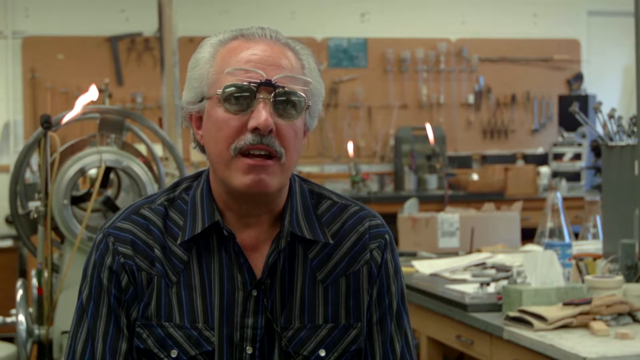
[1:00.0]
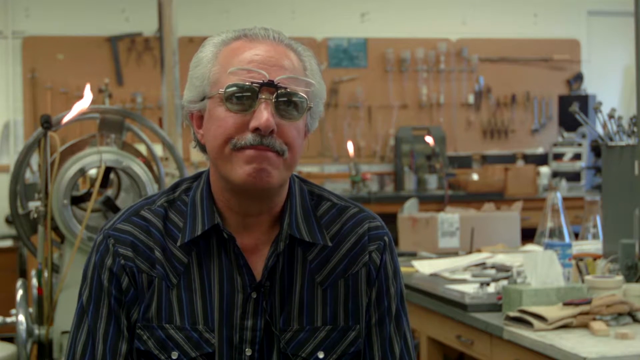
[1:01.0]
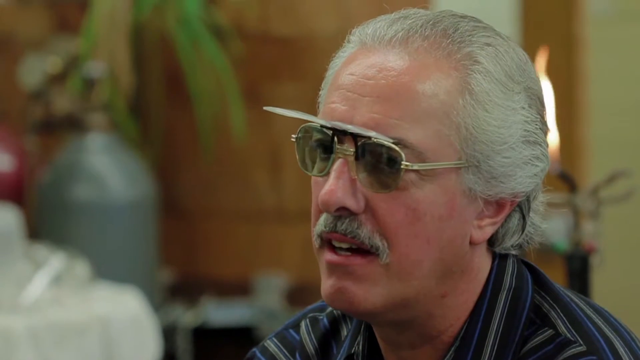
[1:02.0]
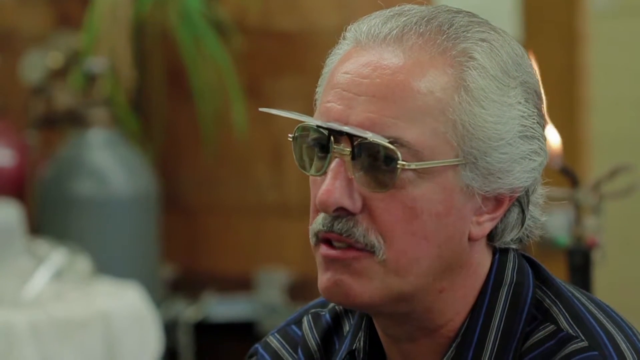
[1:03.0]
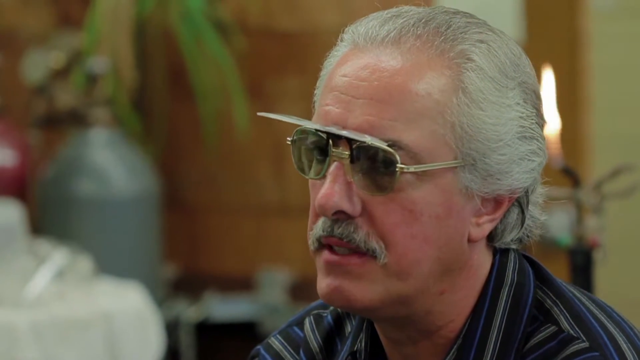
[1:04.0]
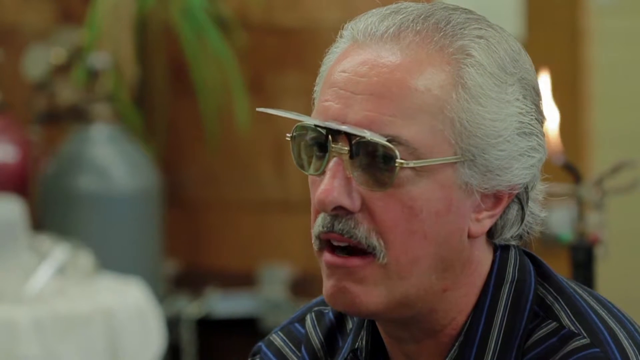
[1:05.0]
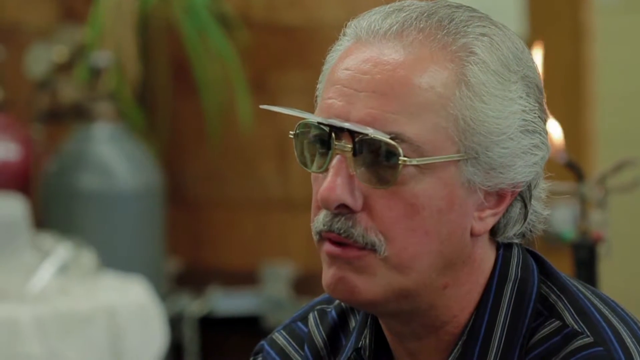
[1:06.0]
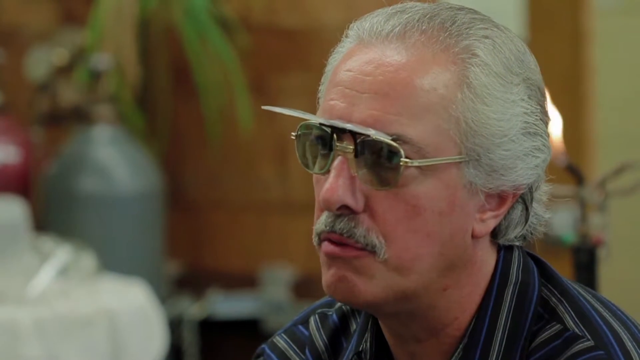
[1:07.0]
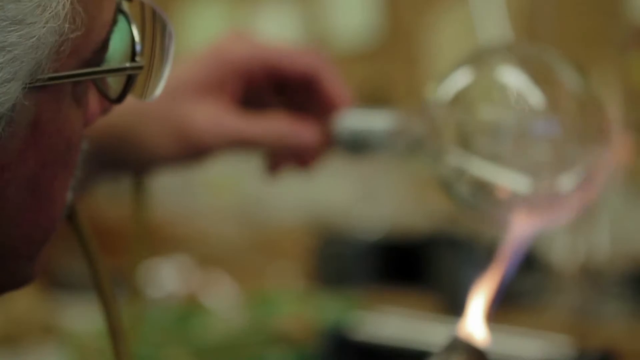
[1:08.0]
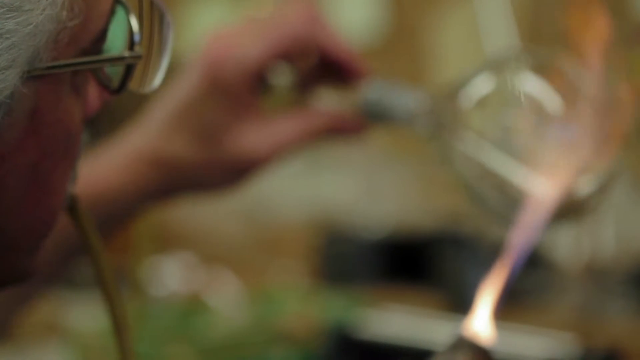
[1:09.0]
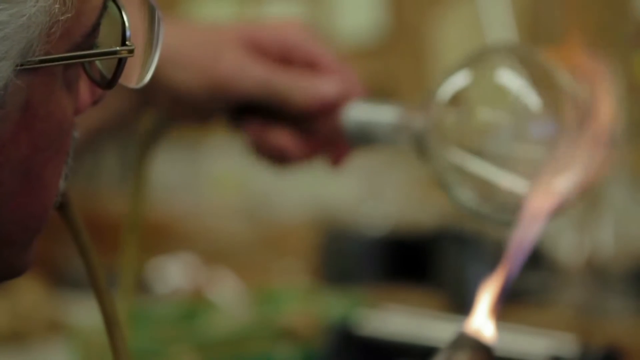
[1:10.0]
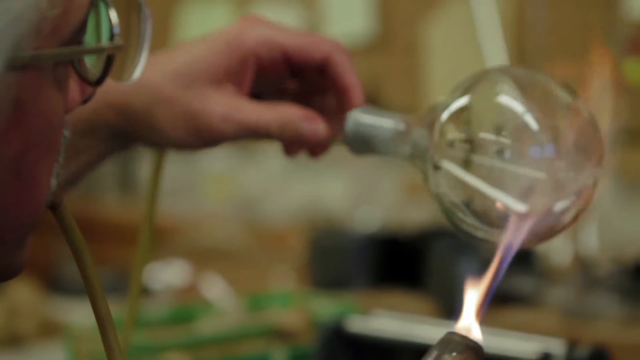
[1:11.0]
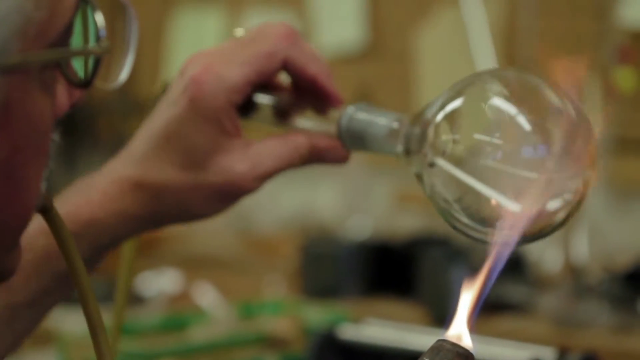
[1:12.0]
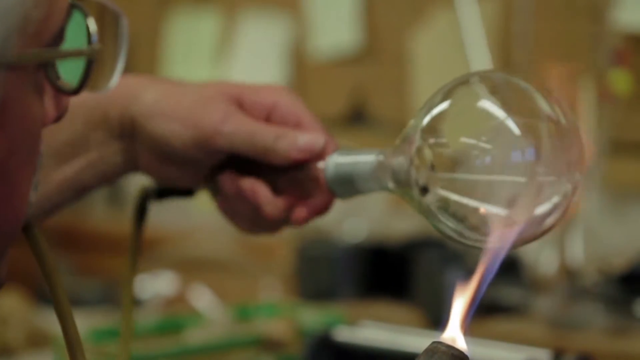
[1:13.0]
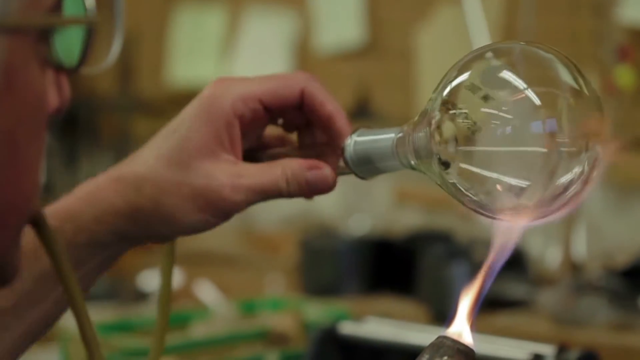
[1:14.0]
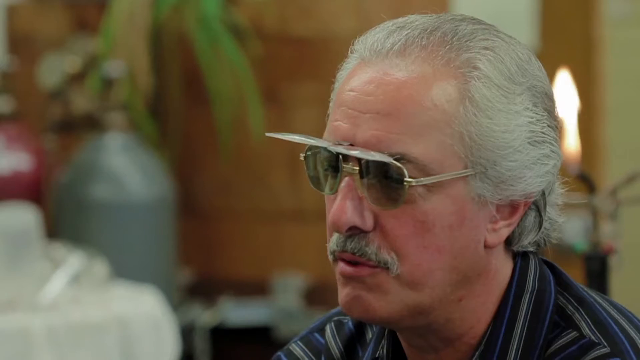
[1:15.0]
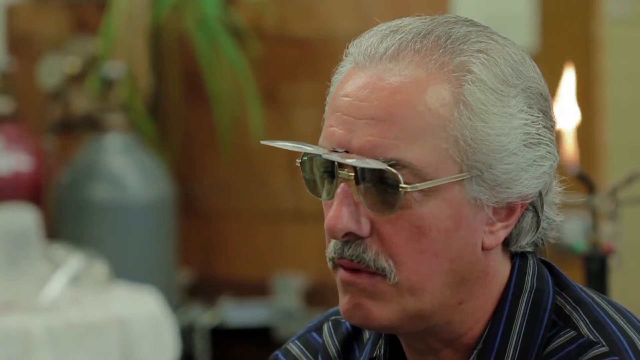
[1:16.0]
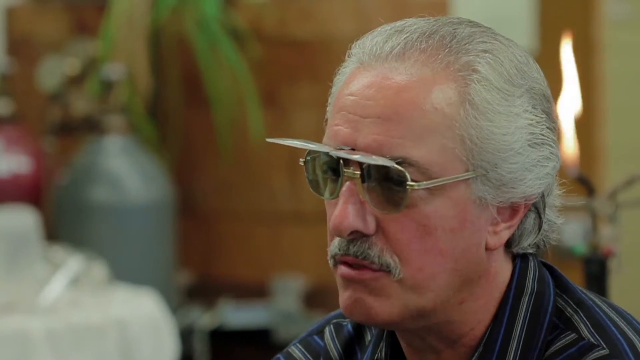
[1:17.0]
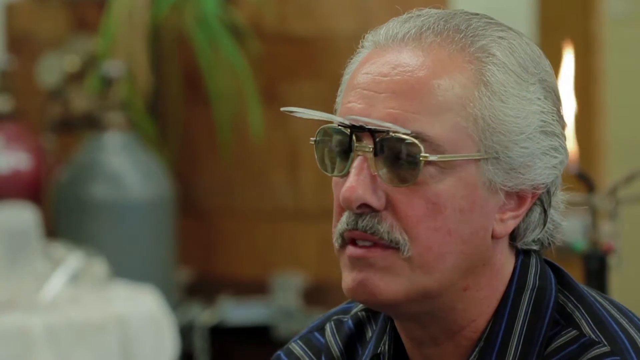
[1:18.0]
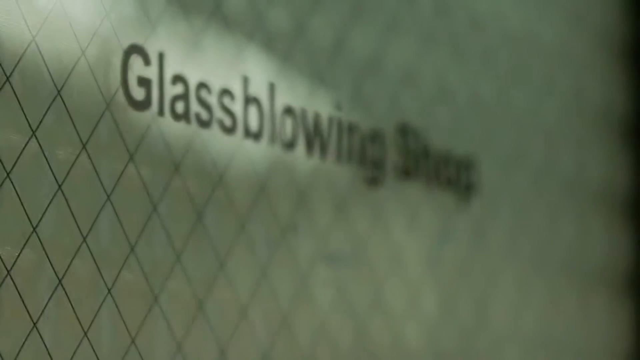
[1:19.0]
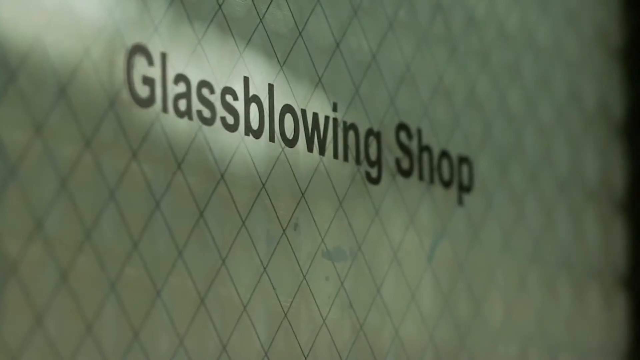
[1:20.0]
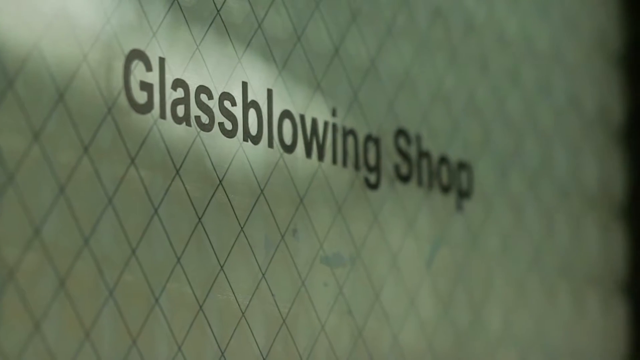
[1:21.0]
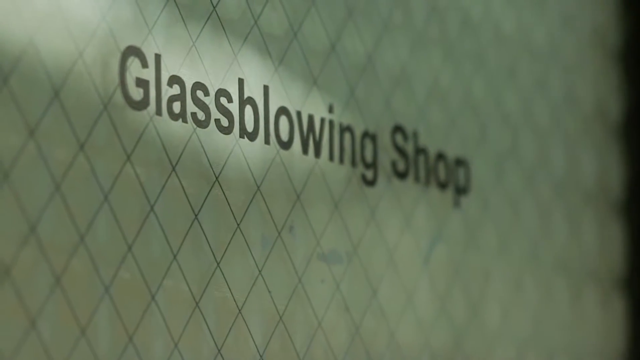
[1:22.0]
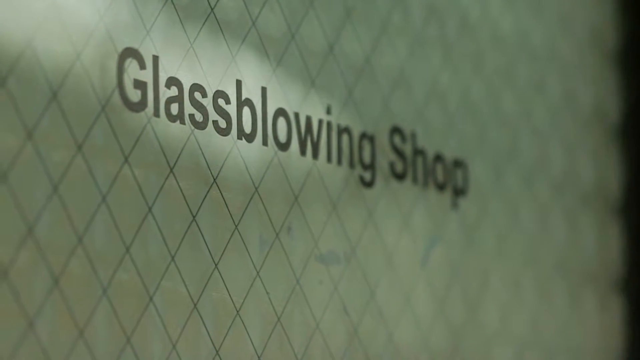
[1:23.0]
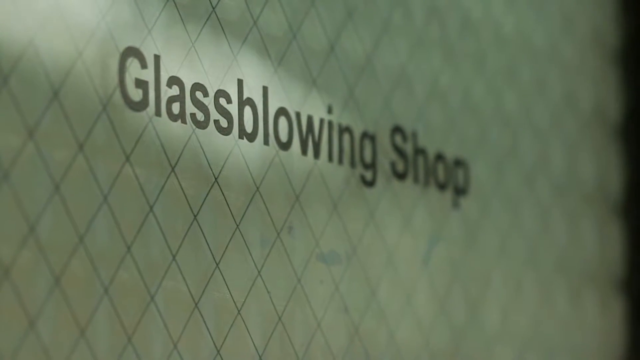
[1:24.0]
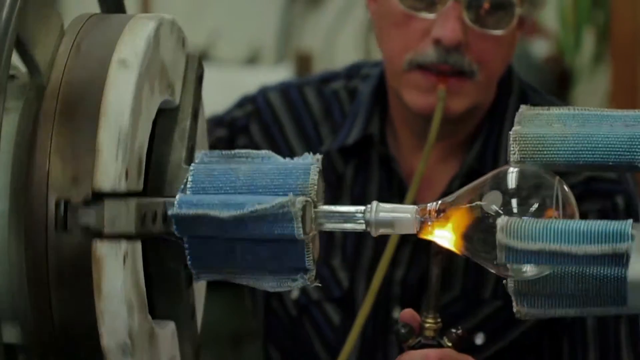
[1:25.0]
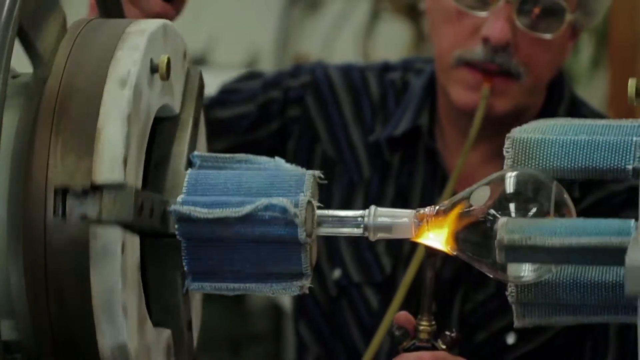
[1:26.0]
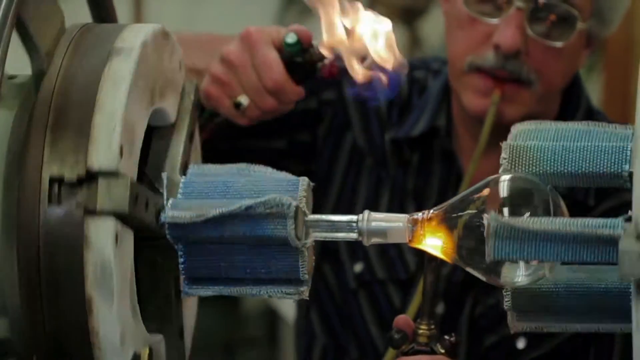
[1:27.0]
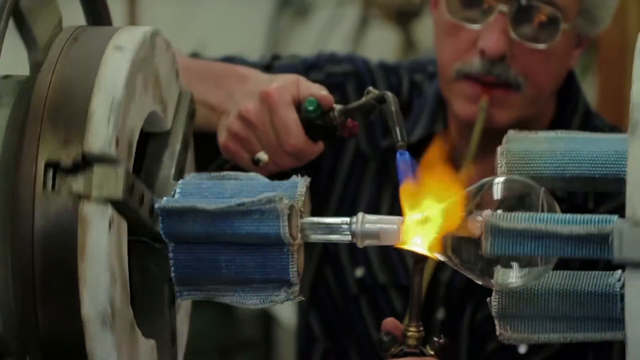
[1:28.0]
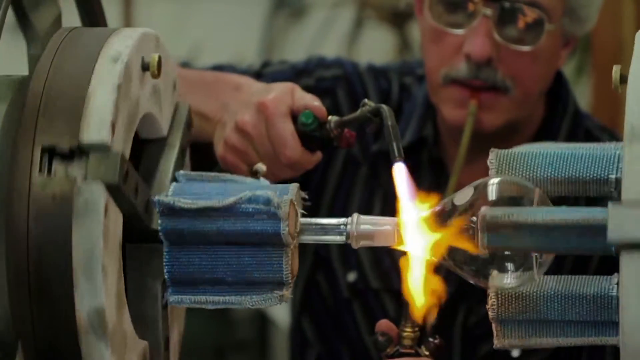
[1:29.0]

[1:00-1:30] He talks while facing the camera and nods as he speaks. A blurred scene comes into focus, showing him burning a glass and carefully moulding it; the glass appears to be a science beaker. He continues to talk, and then text reads "glass blowing shop"; it seems he has a store where he sells the glass pieces he moulds. He puts more fire and more pressure on the glass being spun by the machines, carefully takes another tool and cuts off the excess glass, and then moulds another, smaller glass.